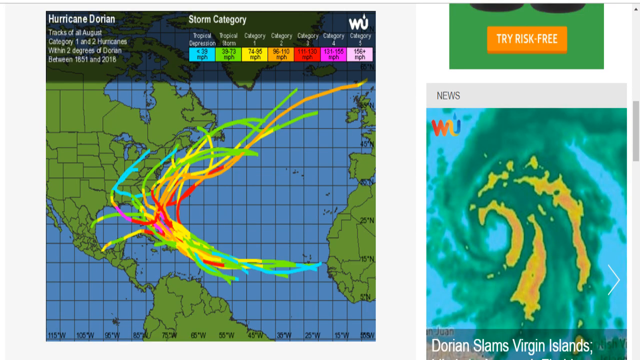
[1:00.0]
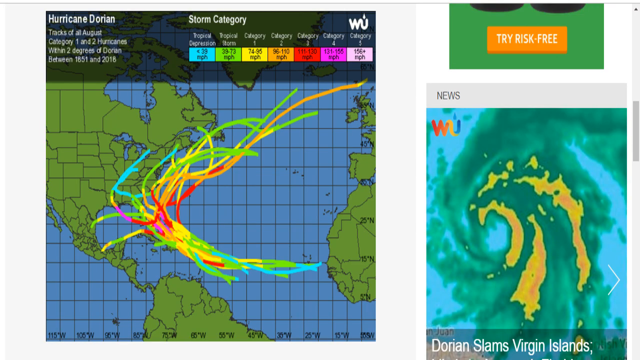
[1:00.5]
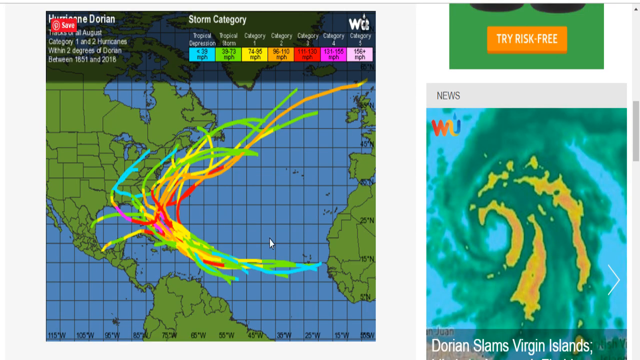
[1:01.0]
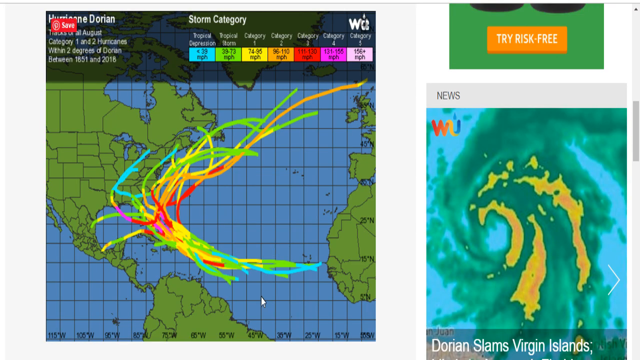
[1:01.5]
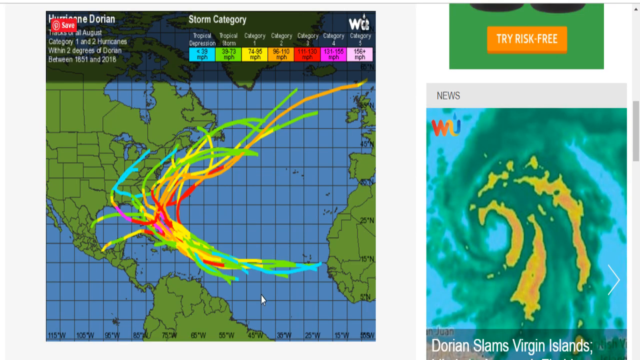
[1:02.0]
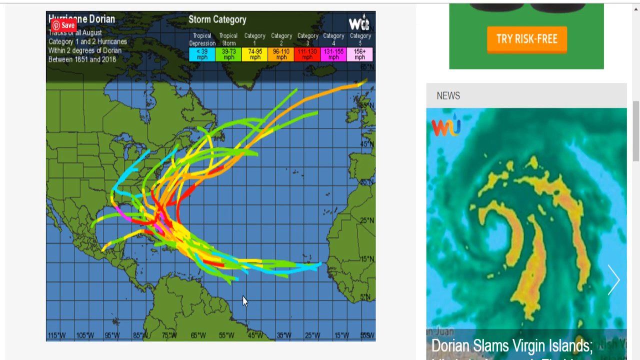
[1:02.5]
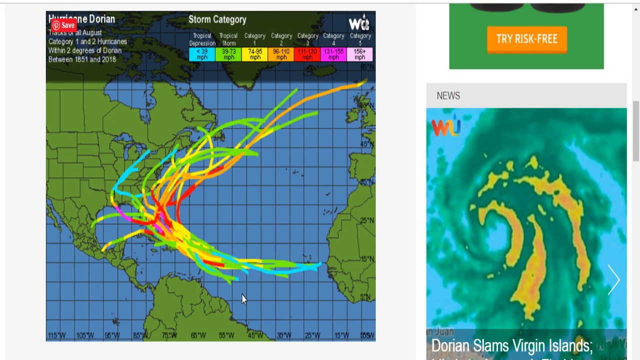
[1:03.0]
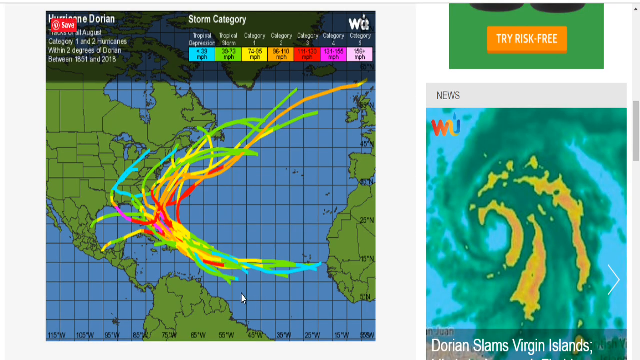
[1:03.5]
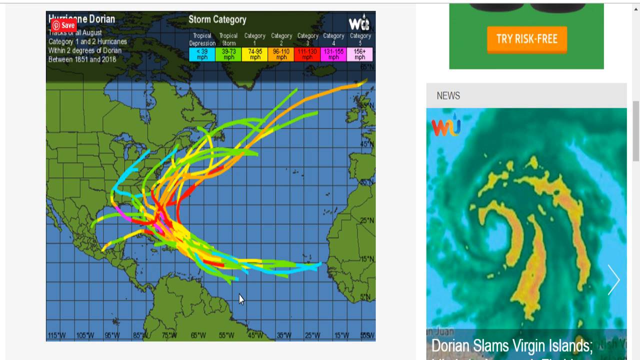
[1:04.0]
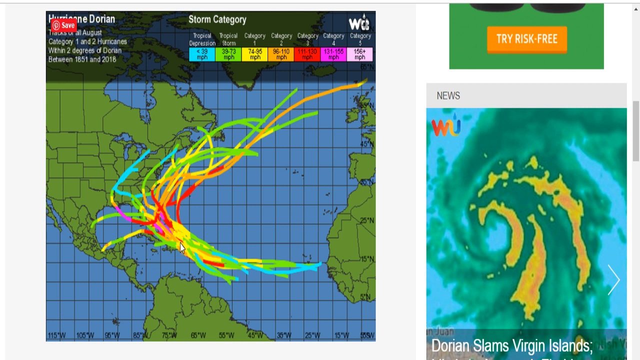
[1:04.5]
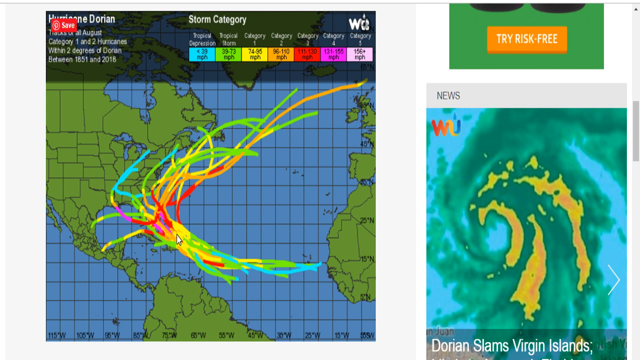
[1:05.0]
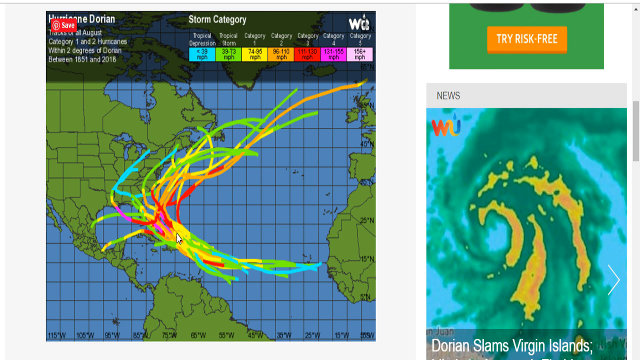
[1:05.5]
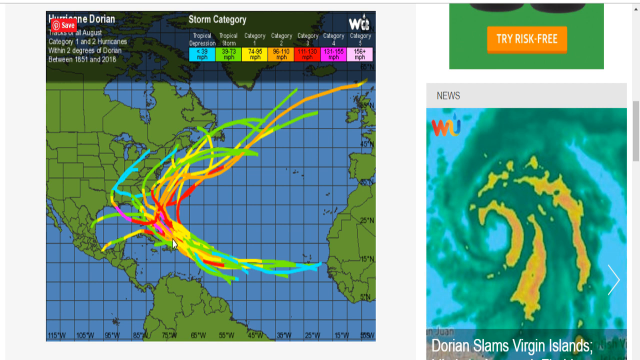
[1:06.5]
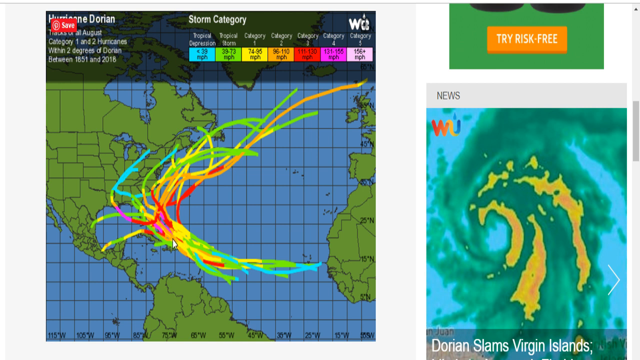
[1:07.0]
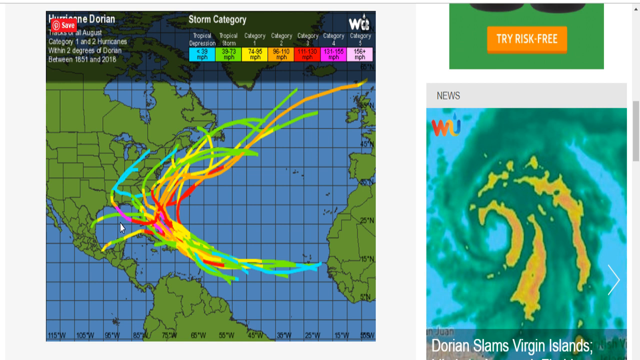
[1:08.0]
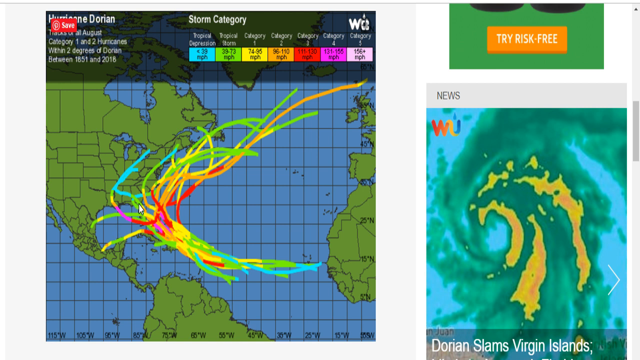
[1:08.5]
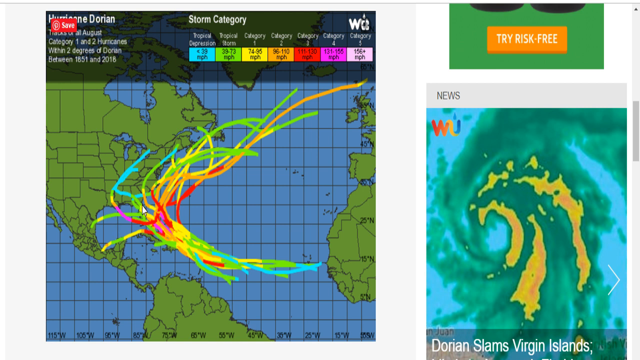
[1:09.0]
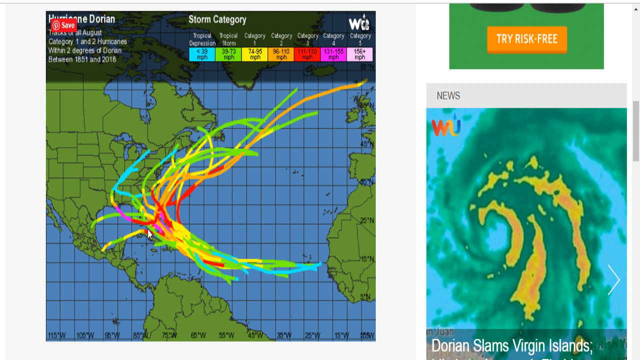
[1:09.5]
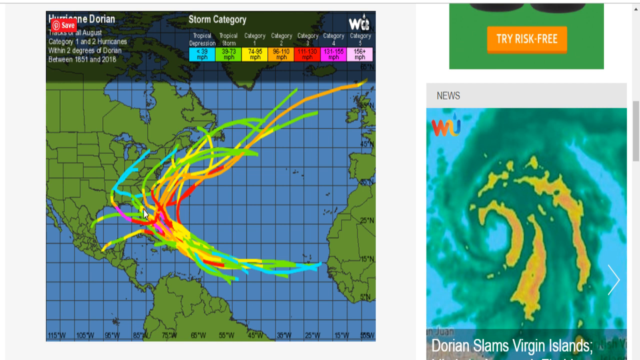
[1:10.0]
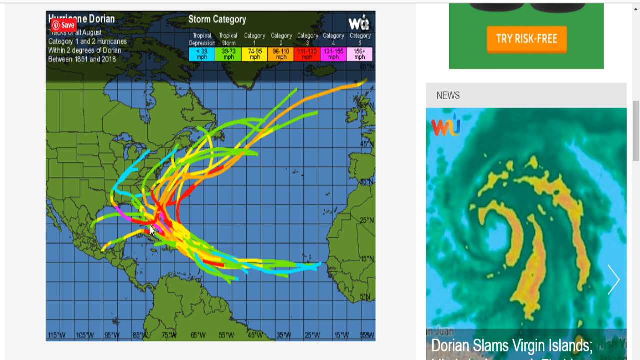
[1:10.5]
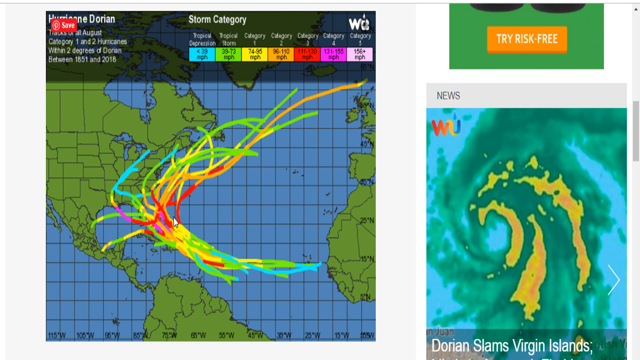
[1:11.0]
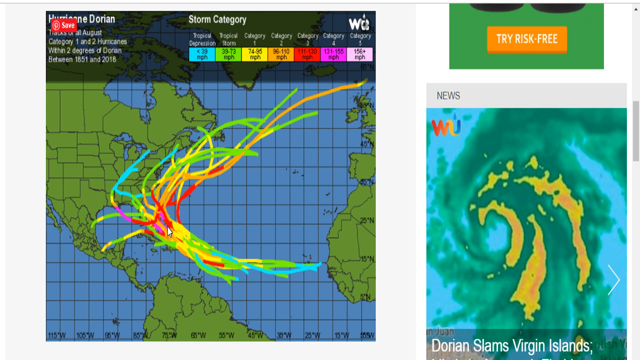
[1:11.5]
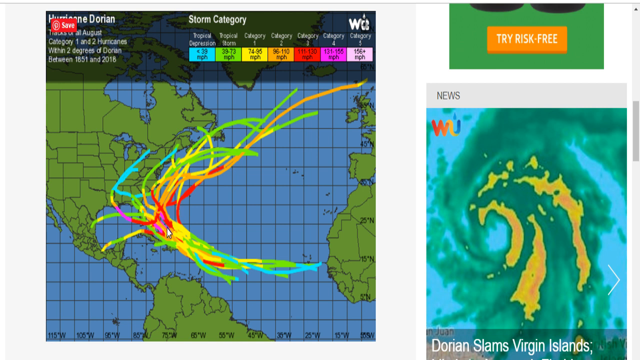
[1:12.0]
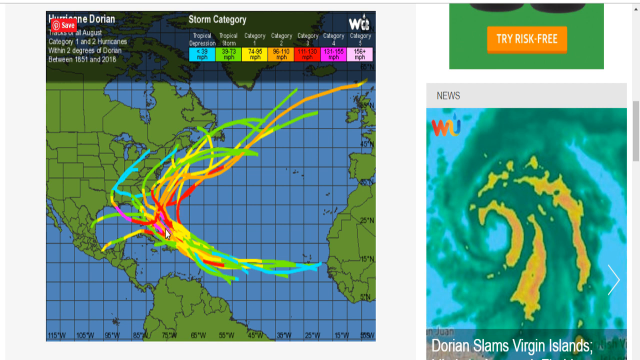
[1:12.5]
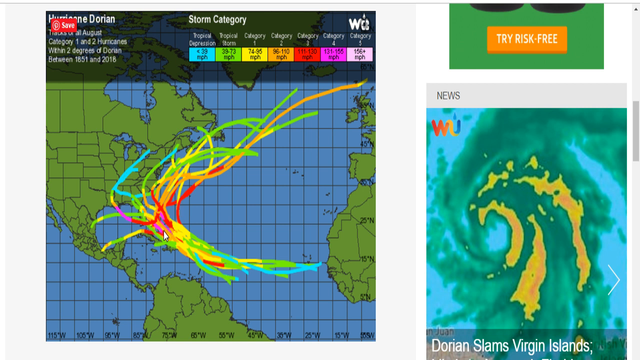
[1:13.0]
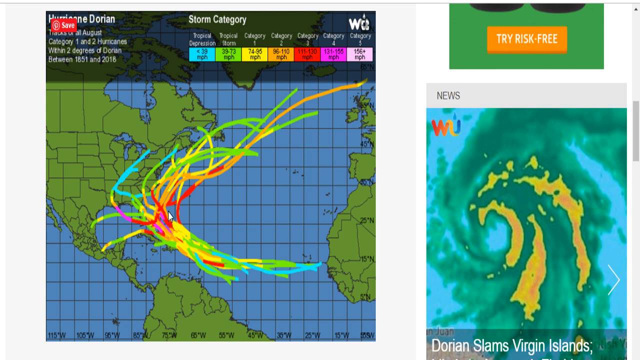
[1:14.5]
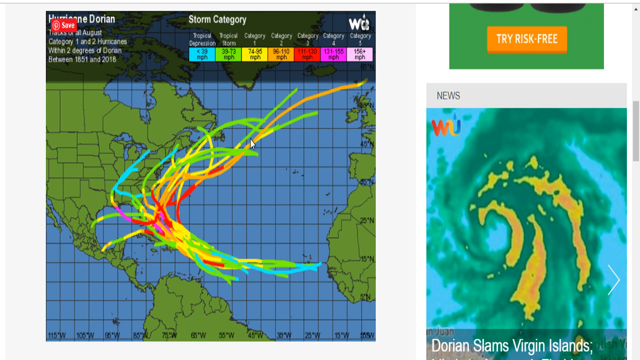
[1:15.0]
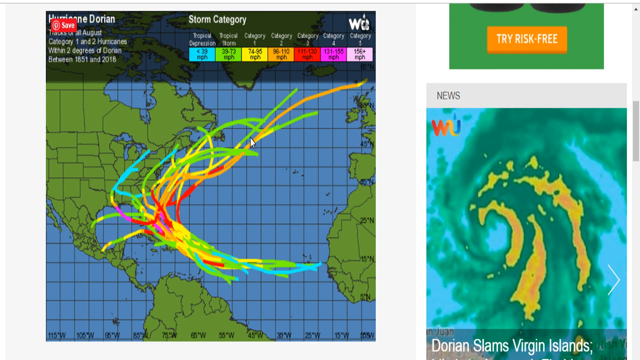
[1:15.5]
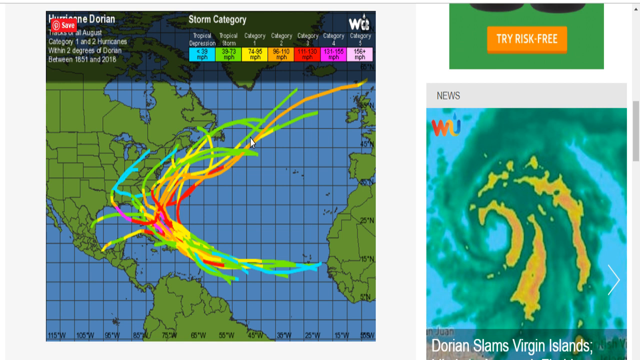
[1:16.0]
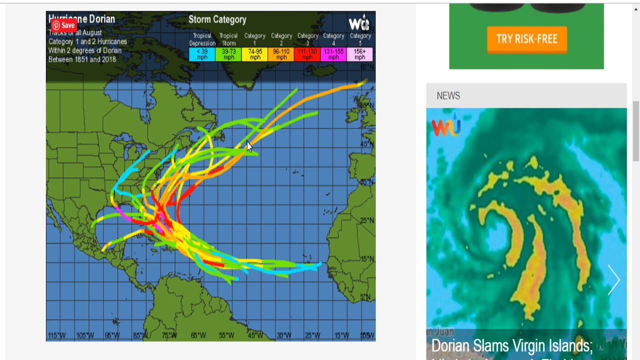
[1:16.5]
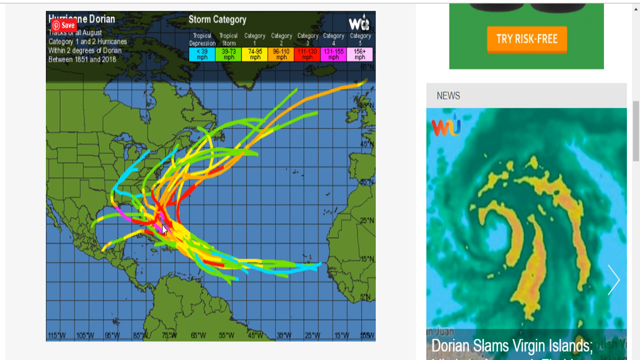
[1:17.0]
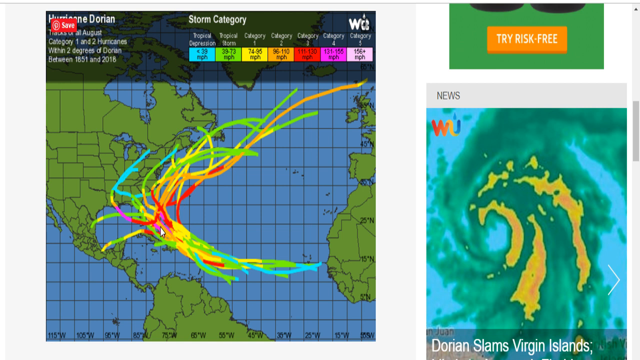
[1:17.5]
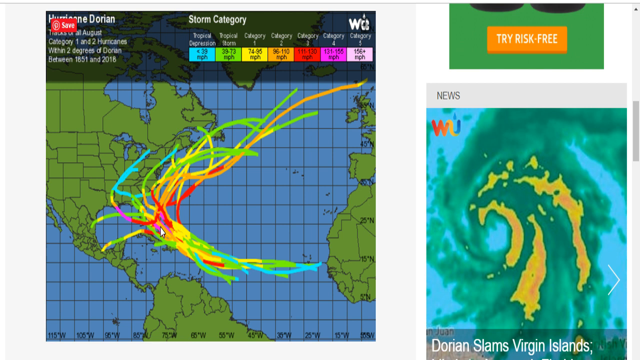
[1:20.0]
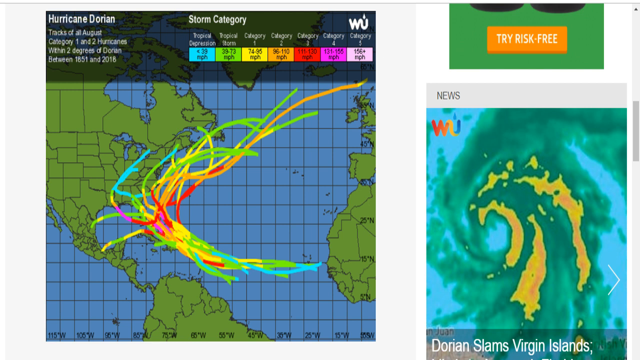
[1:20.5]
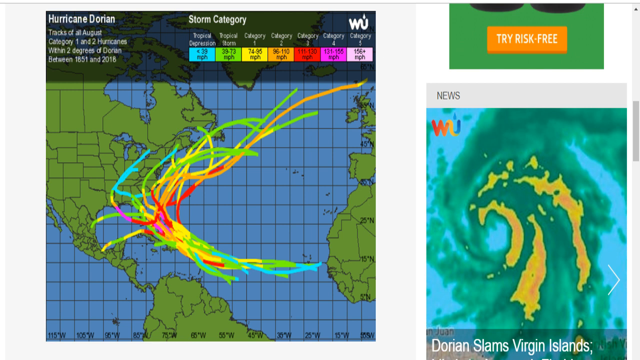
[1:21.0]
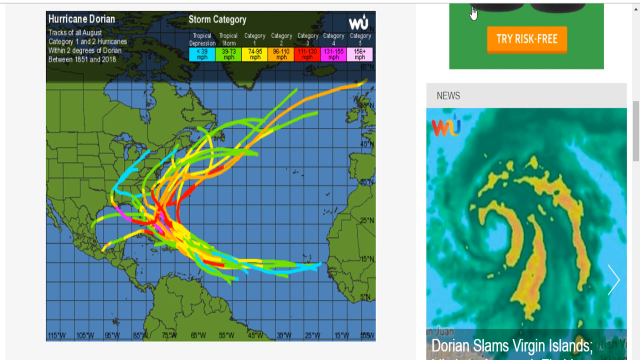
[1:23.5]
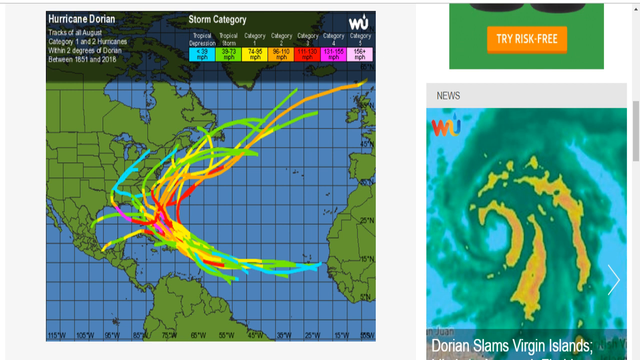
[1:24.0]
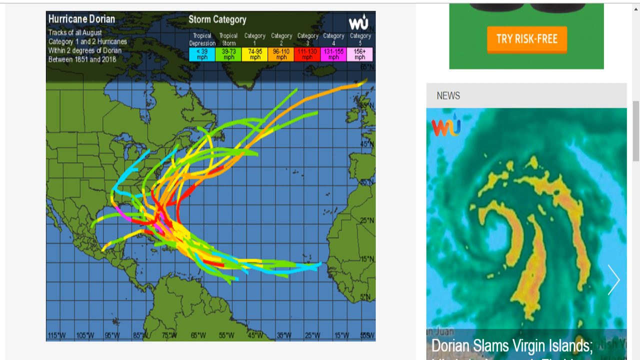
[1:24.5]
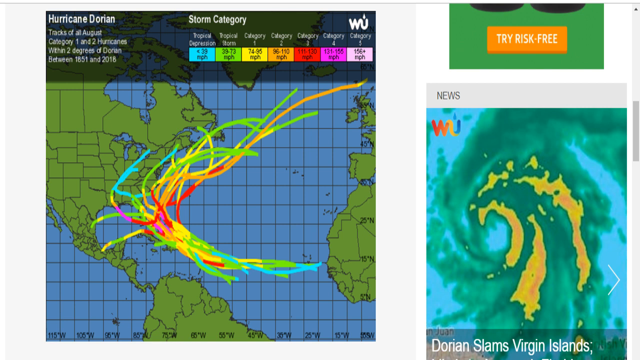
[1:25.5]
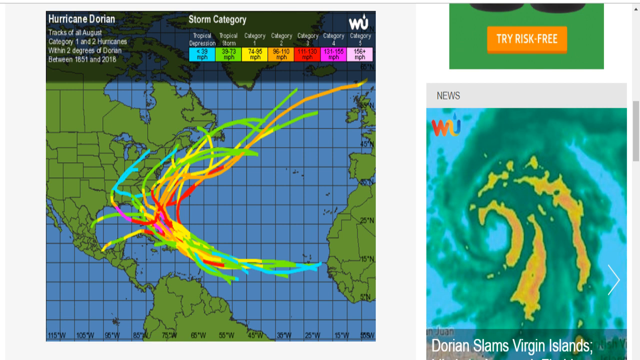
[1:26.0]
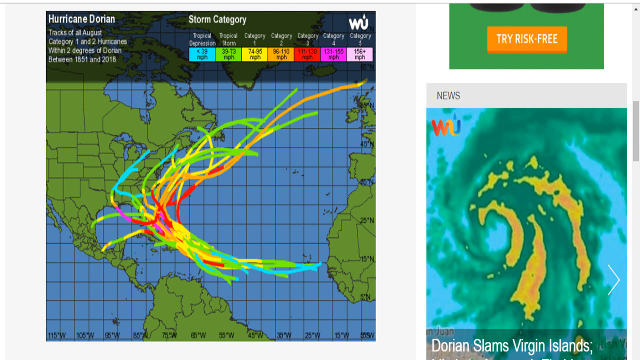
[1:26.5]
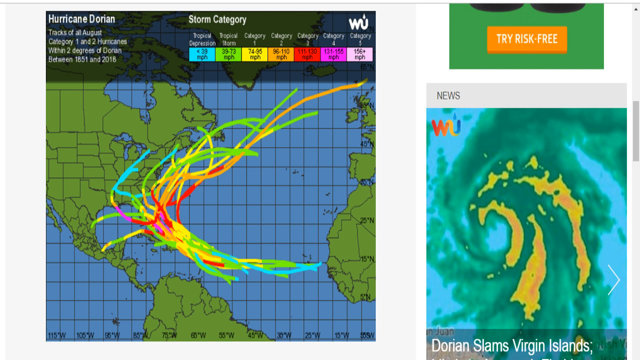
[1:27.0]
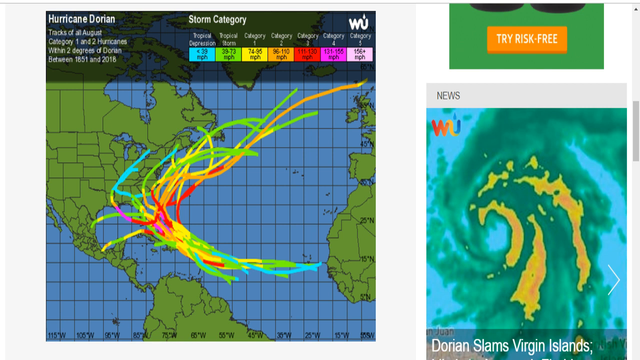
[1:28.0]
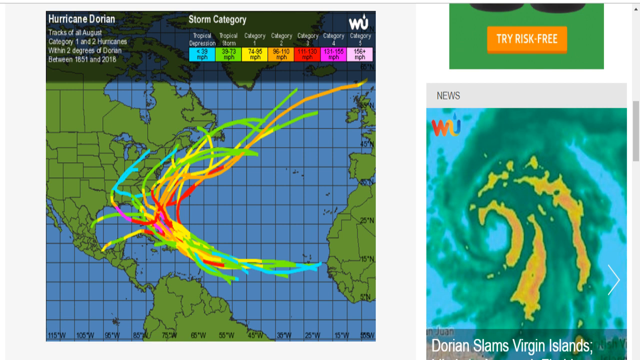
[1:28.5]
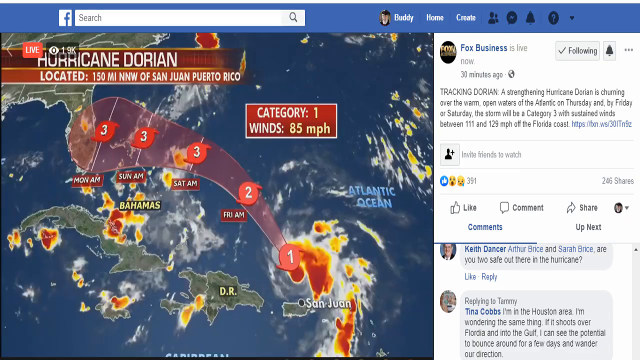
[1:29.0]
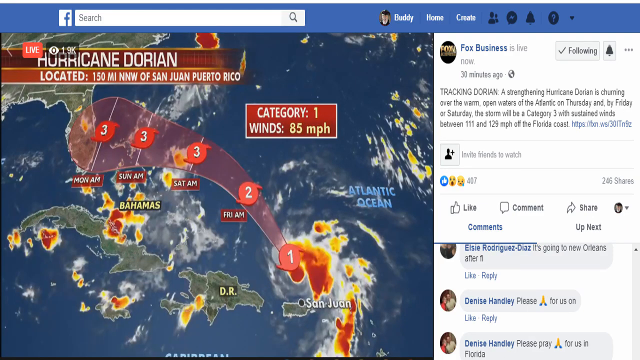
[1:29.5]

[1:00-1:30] The newer blue and green map is shown, with green depicting the land and blue the sea. Although simple, it marks all the different states and provinces of North America and the different country borders. The colors on it seem to be hand drawn, apparently depicting the flow of the hurricane, in red, green, orange and yellow; red, apparently the higher category, is in the center where San Juan is, and near the ends more blue and green lines come out from the center, apparently indicating where the hurricane is going and that it is less intense away from the hot spot. On the right side is another, smaller graphic, "Dorian slams Virgin Islands", another heat map showing the swirl of the hurricane with a bit of orange, apparently where the wind is strongest. At the top, part of an advertisement is showing.